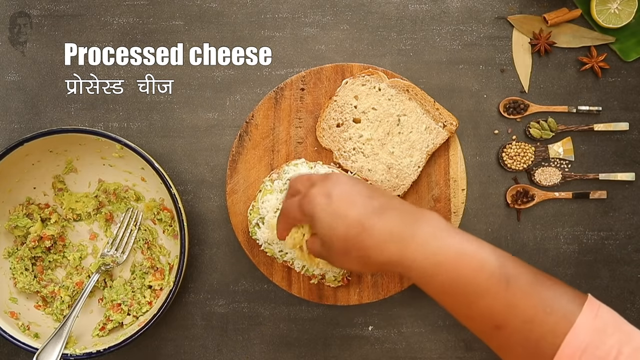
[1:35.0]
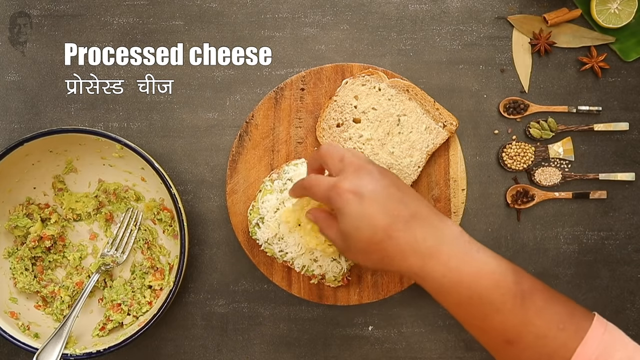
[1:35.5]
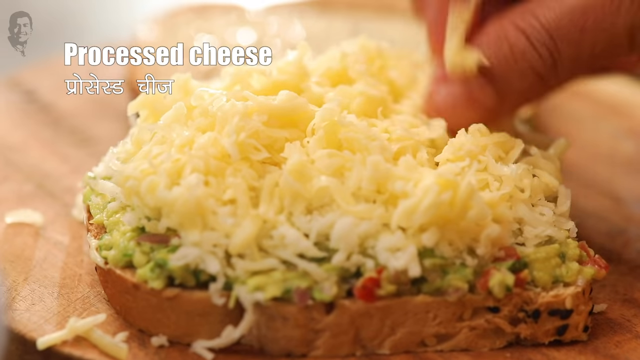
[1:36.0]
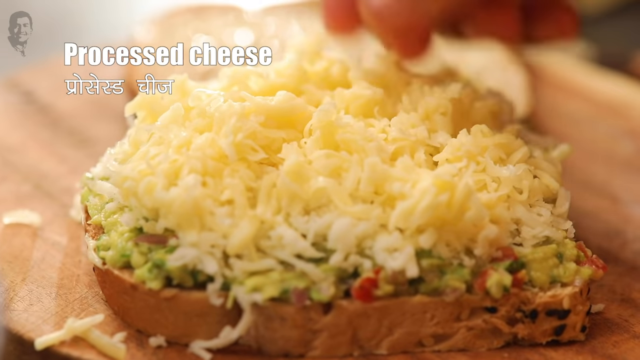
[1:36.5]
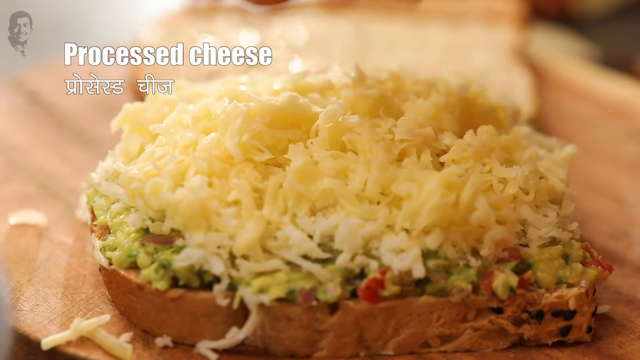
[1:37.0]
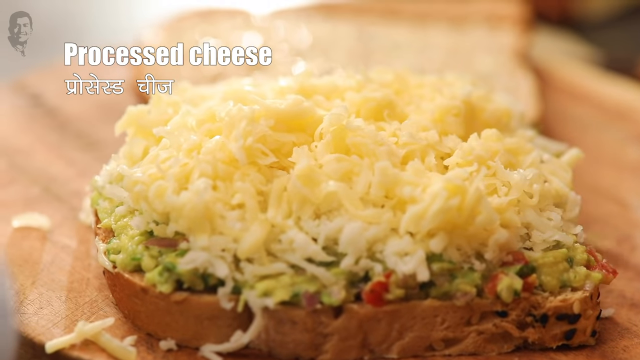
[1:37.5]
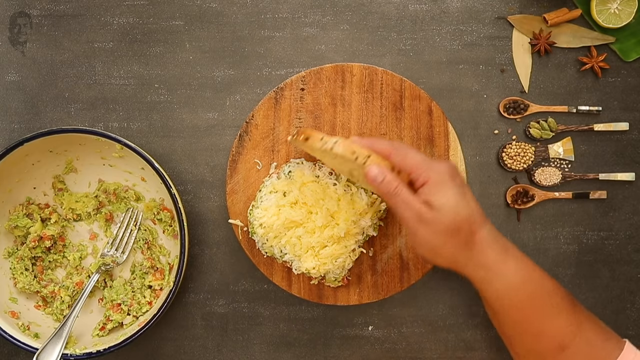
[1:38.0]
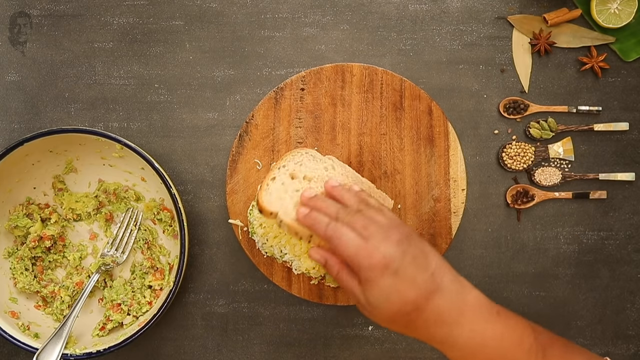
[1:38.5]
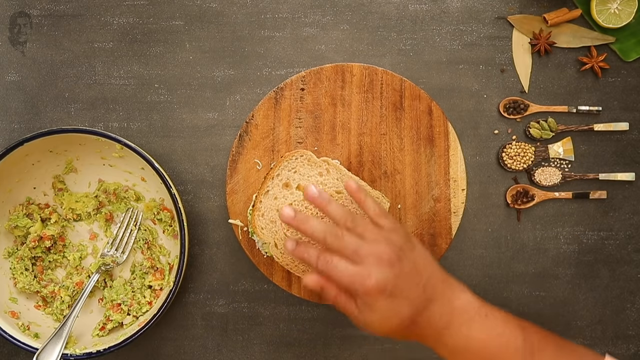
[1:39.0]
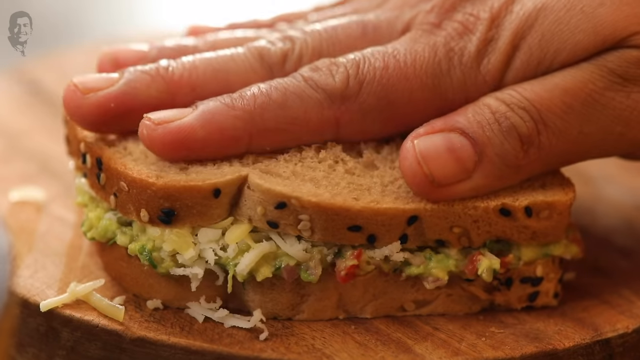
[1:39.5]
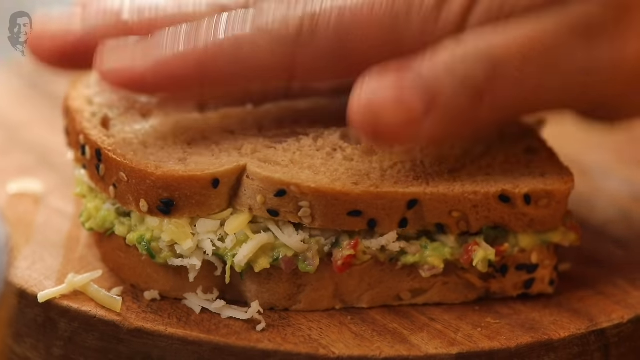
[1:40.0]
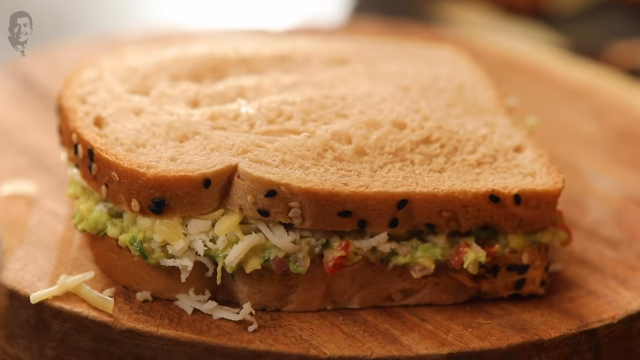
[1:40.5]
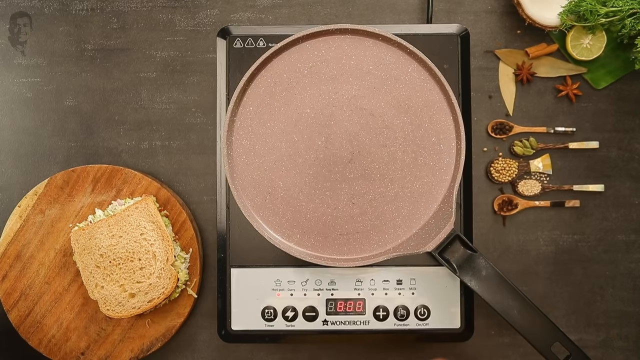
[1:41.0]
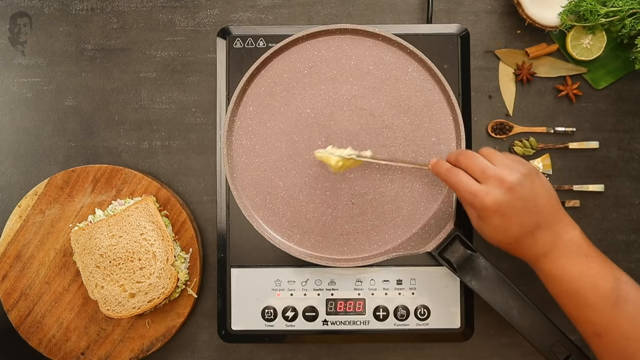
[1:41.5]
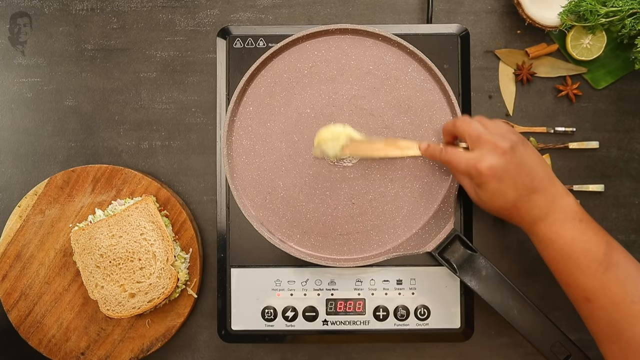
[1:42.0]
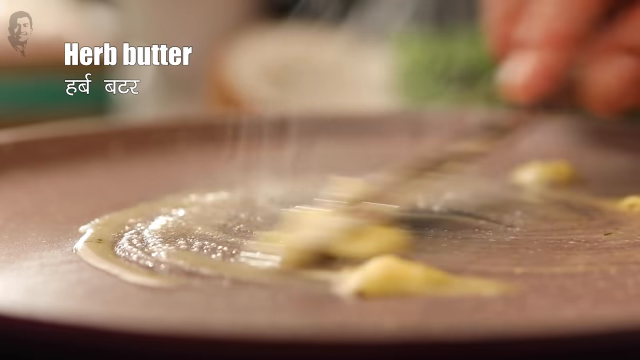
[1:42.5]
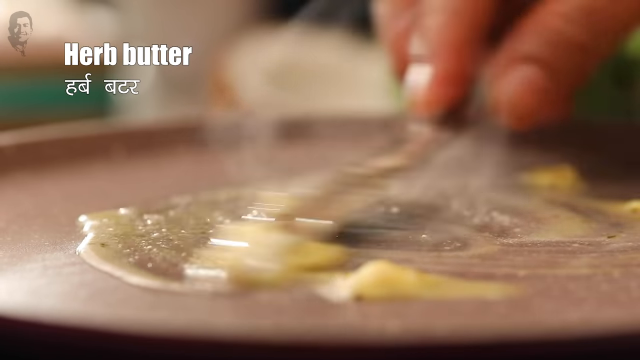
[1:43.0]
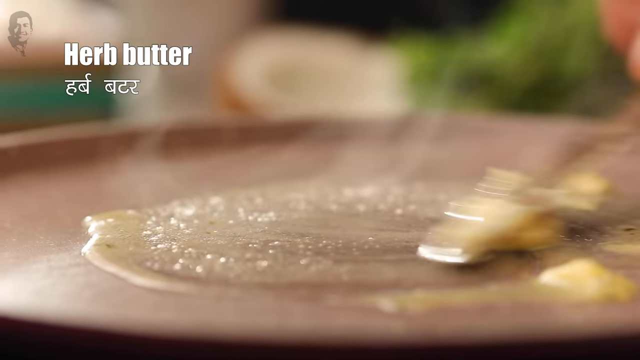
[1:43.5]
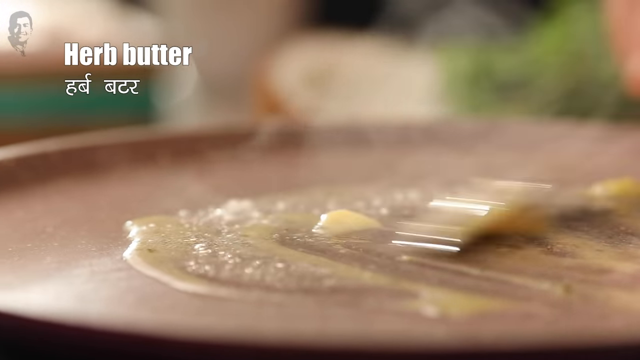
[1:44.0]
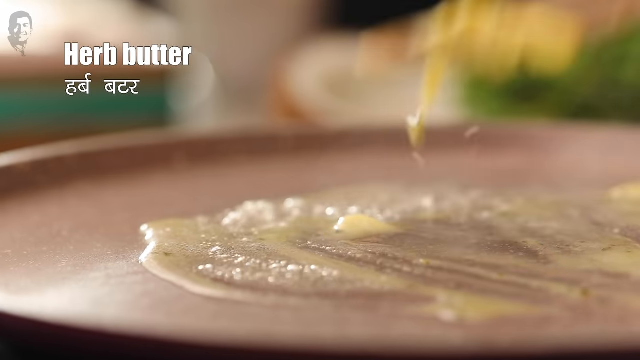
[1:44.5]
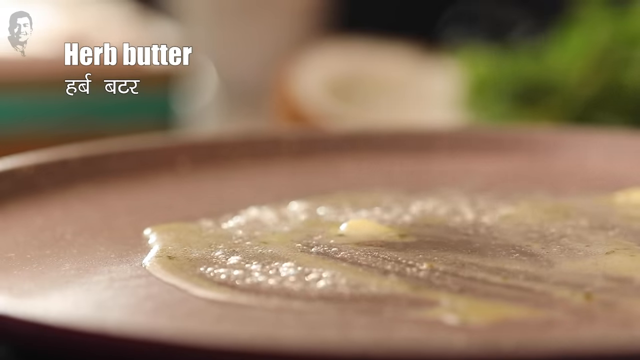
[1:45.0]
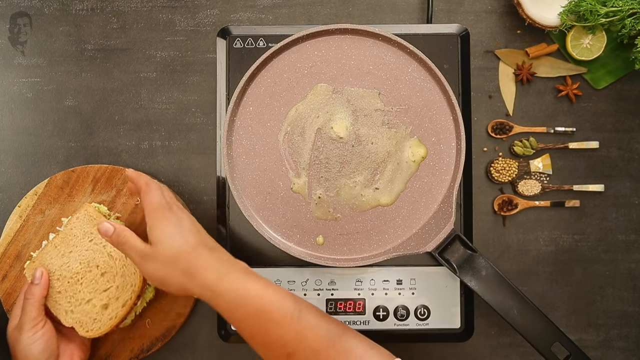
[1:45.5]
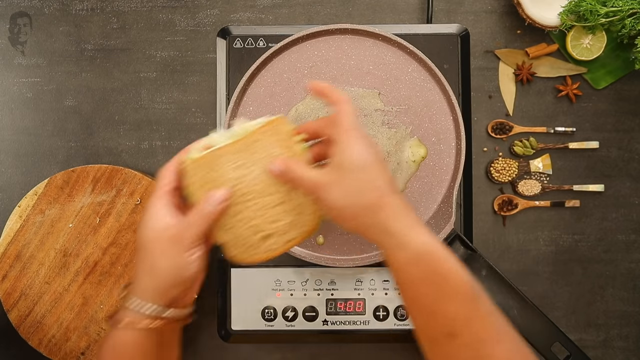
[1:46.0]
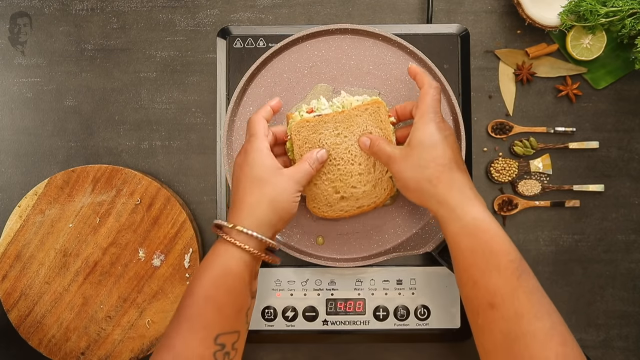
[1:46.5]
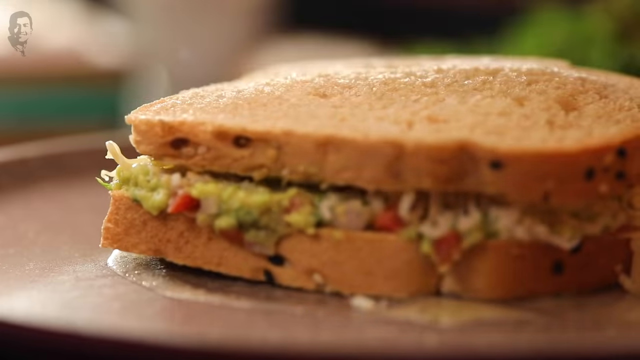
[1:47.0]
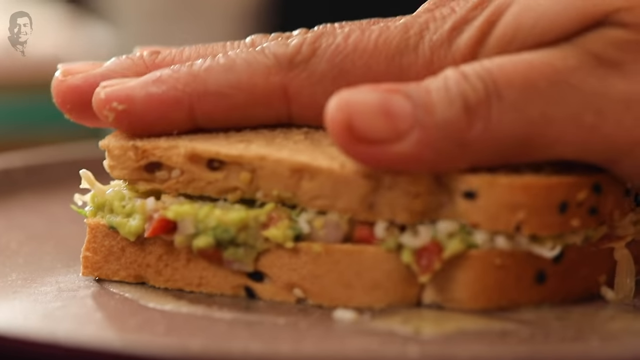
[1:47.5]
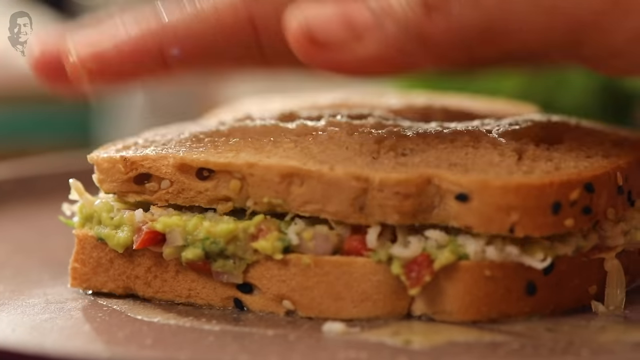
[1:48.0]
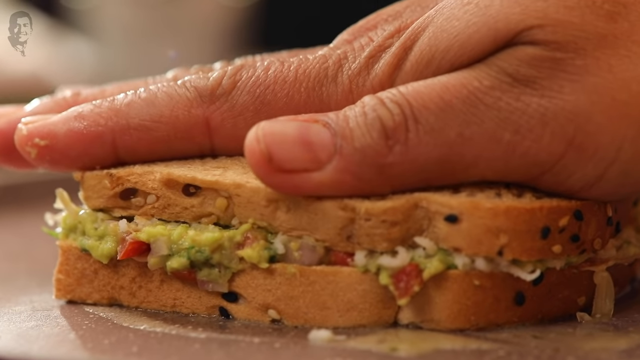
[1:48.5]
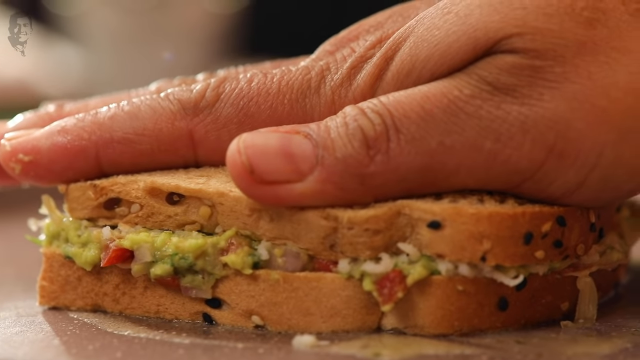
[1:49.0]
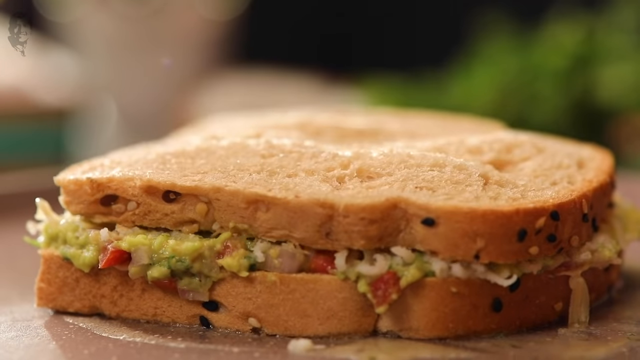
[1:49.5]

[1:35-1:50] The woman finishes putting the processed mozzarella cheese on top of the avocado mixture, which is about half an inch thick, and puts the second slice of multigrain bread on top. She pats the top of the sandwich down. A small hot plate with one small eye and several knobs holds a small frying pan; she puts butter in the pan, where it melts right away, and spreads it out. She then places the sandwich directly onto the melted butter in the frying pan.